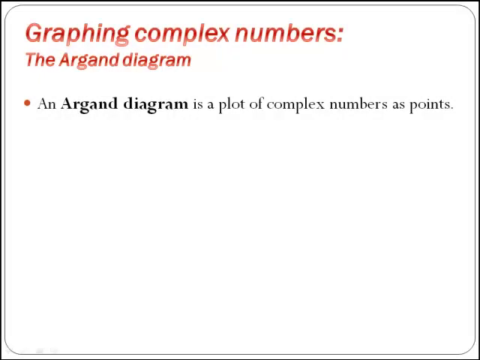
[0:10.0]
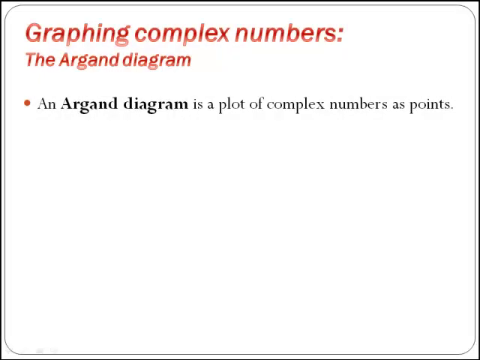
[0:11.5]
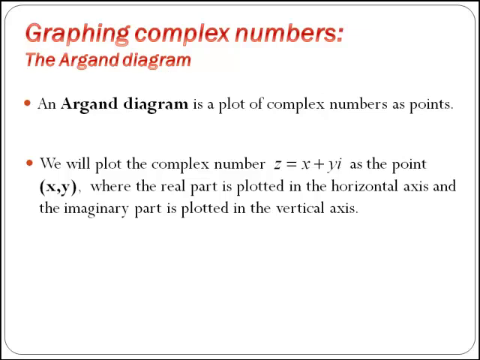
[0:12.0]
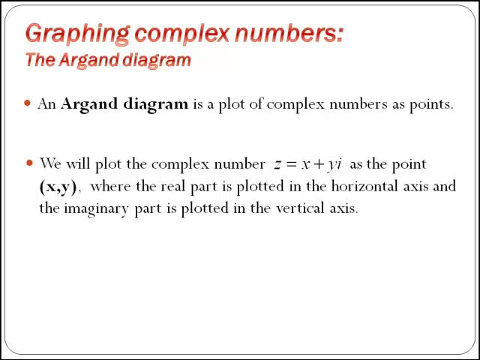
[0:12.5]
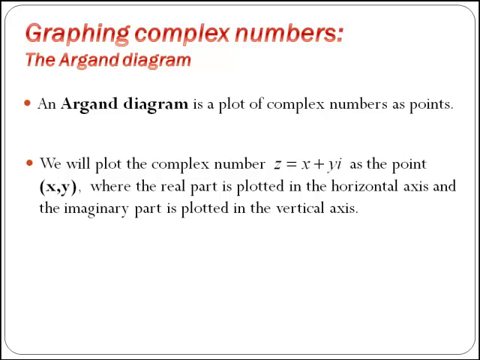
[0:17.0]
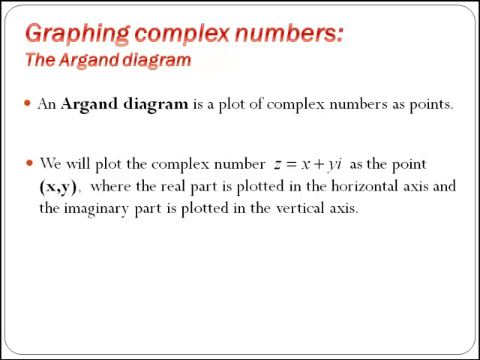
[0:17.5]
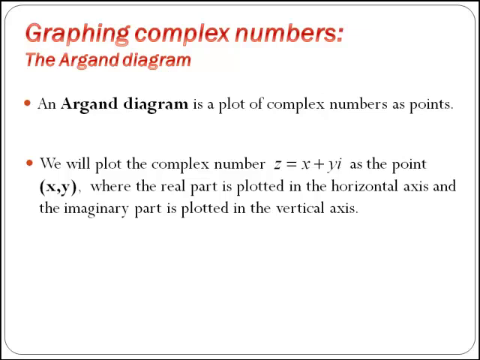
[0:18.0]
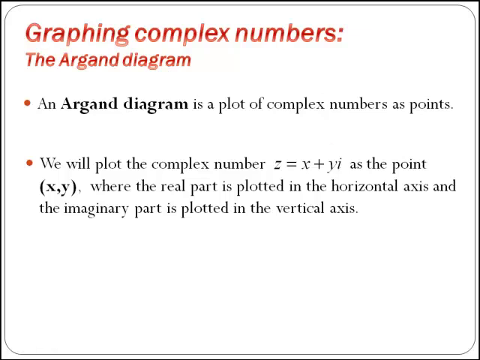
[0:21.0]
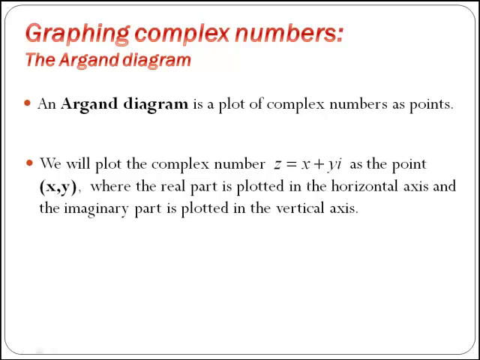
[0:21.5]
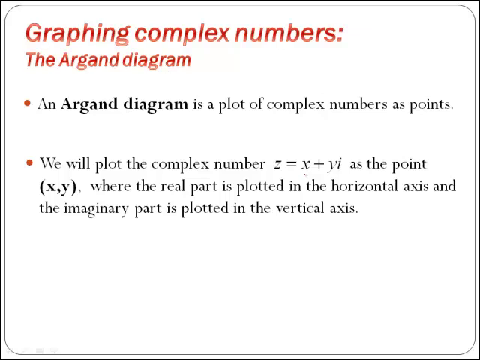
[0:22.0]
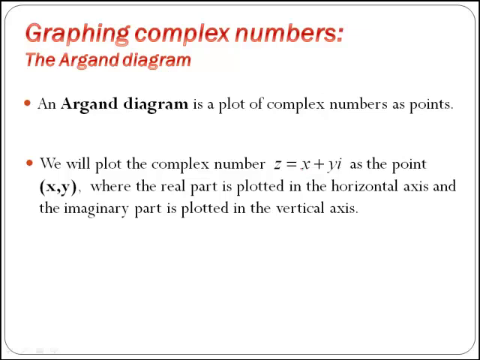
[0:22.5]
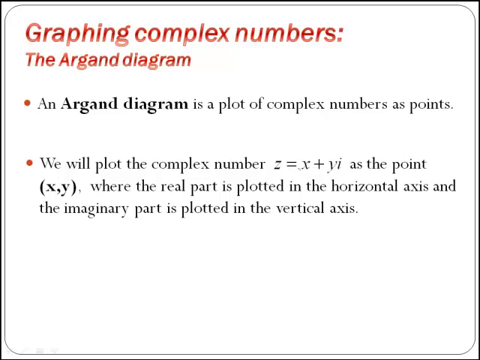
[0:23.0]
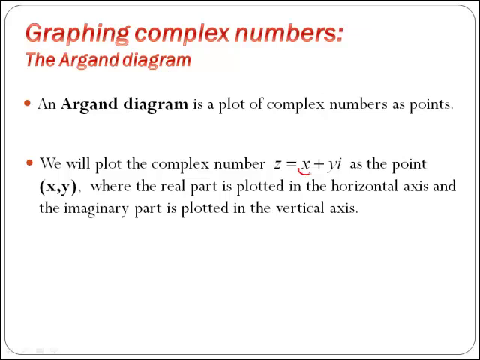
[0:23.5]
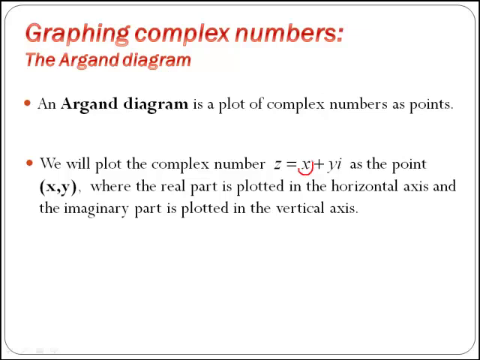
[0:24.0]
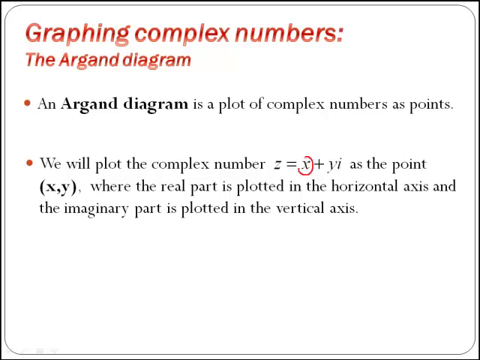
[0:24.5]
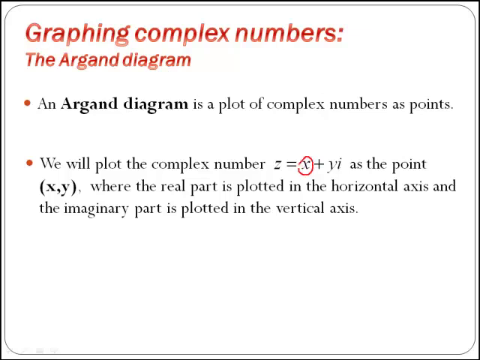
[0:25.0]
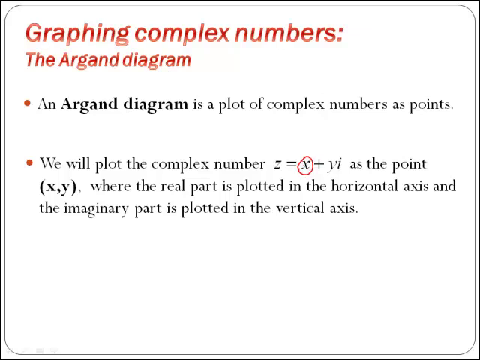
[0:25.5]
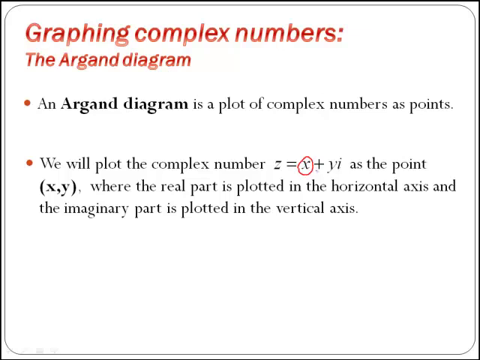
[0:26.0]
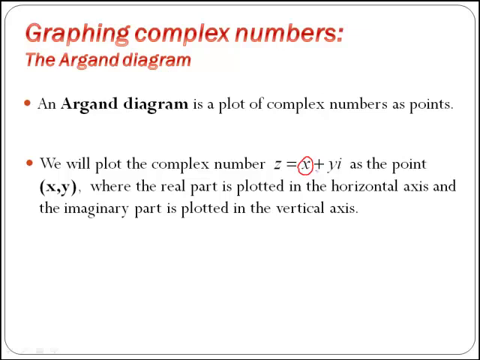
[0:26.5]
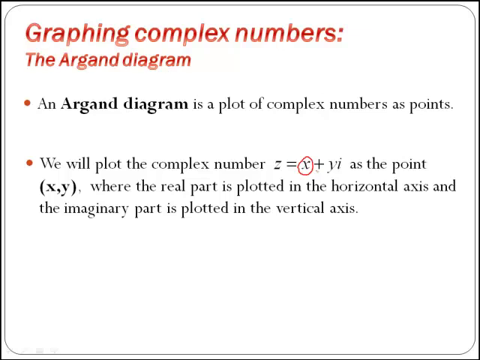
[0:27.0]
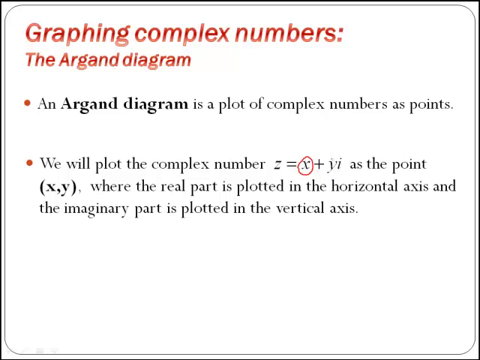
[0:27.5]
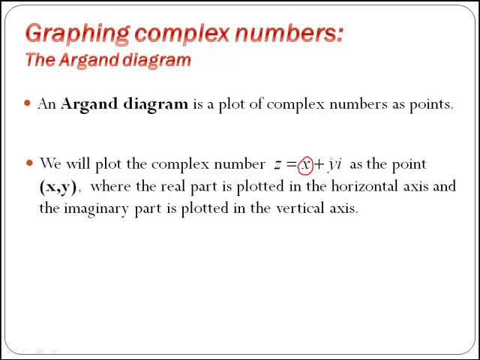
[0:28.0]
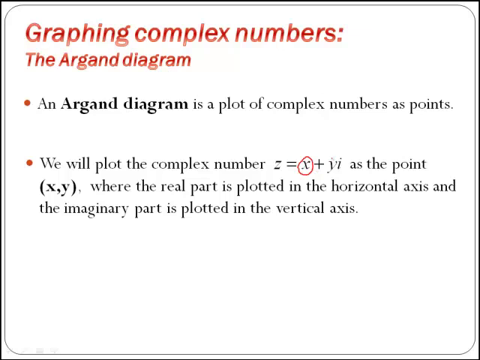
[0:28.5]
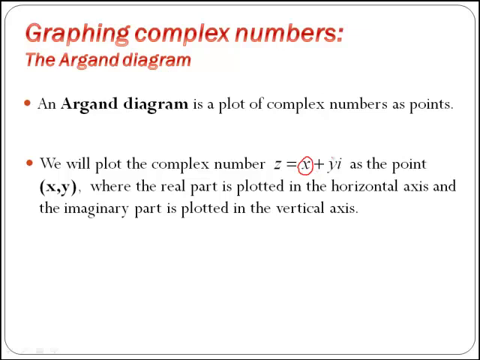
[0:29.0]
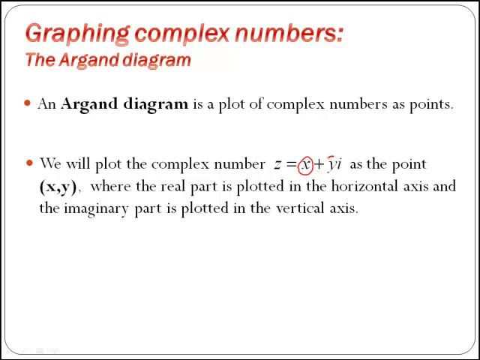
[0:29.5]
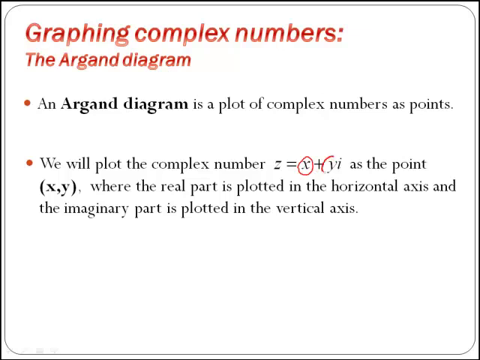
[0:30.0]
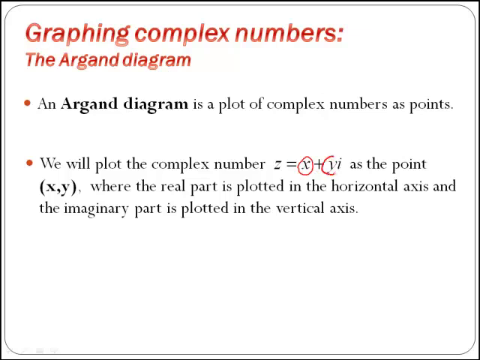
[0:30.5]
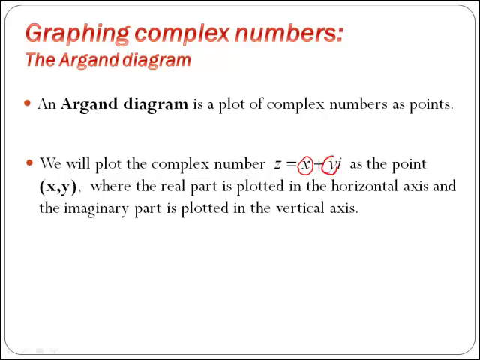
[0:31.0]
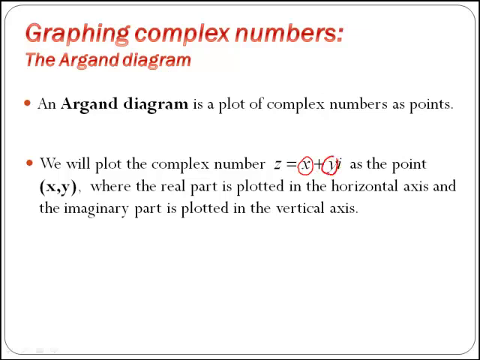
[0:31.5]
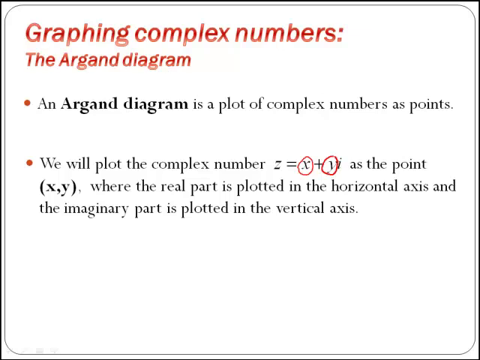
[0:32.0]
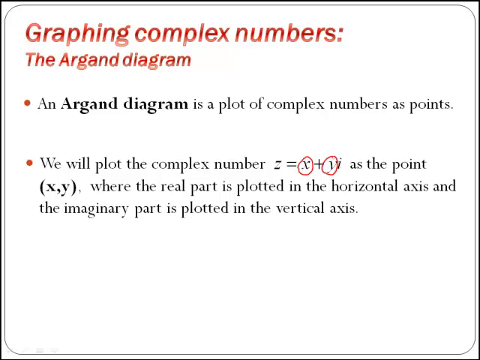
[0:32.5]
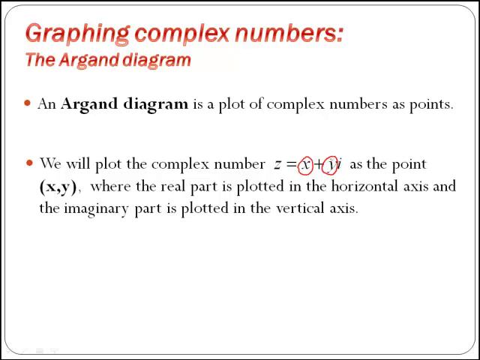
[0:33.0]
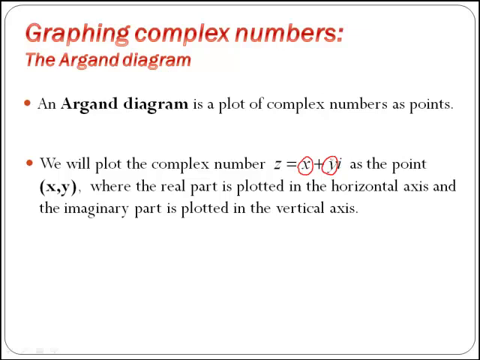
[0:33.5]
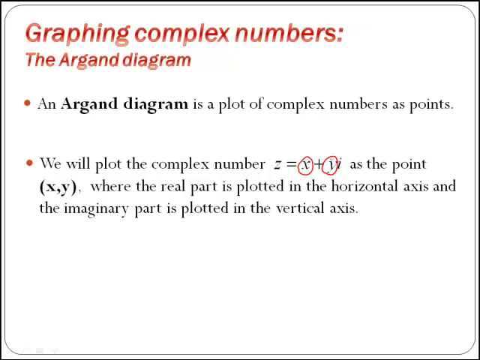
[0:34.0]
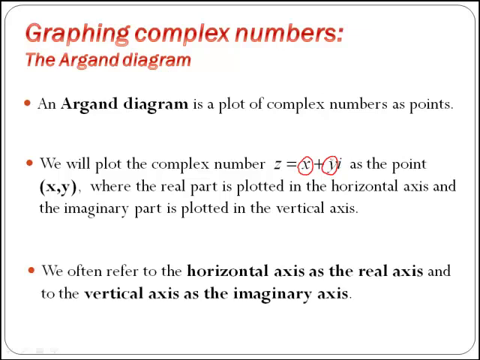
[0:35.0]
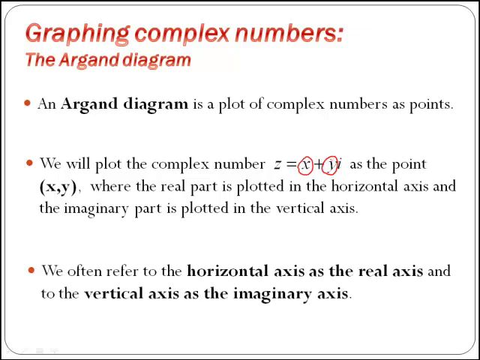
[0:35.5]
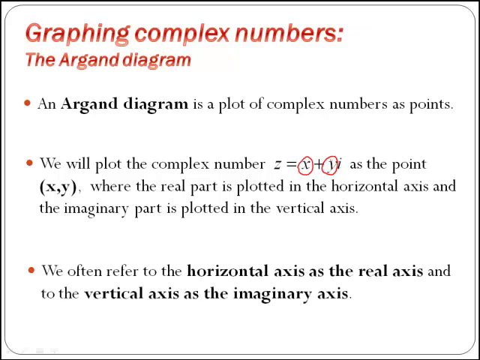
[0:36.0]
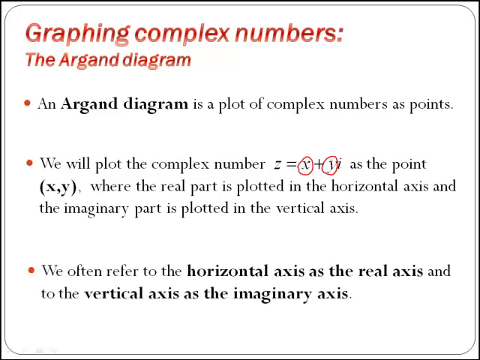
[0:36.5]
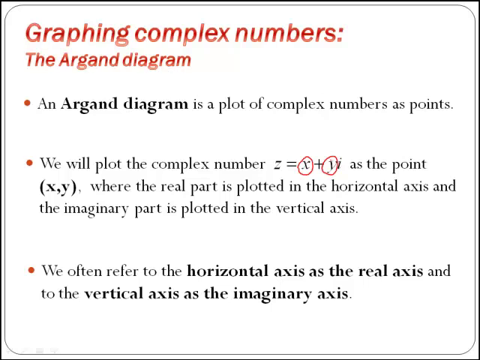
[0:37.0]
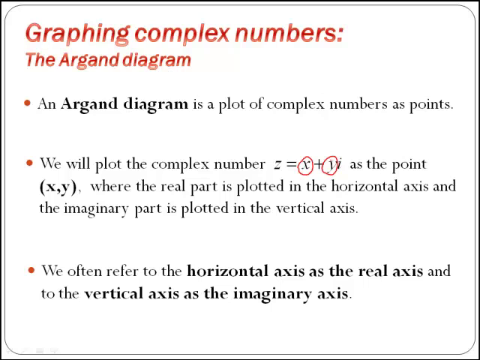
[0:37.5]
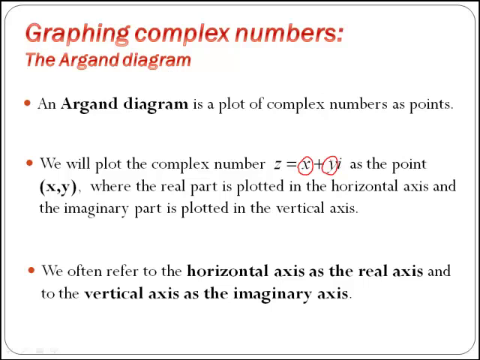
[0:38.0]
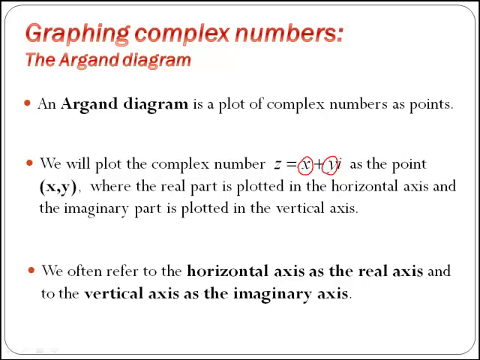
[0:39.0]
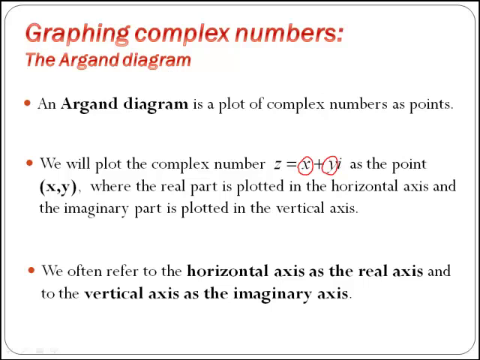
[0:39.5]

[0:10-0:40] The slide has a white background with a gray border. At the top, bold red letters read "graphic complex numbers, the Aragon diagram," with the first bullet point about the Aragon diagram representing complex numbers as points. A second bullet point, with a red bullet and gray text, appears: "we plot complex numbers z = x + yi as the point (x, y)," with "(x, y)" in bold. It continues: "the real part is plotted in a horizontal axis and imaginary part is plotted in a vertical axis." At one point red circles appear over the x and the y. A third bullet point then appears: "we often refer to horizontal axis as a real axis and a vertical axis as an imaginary axis."